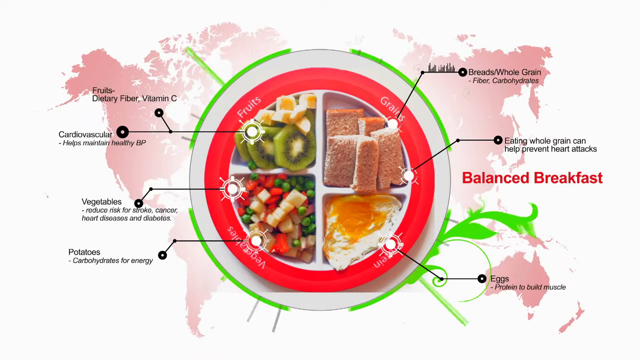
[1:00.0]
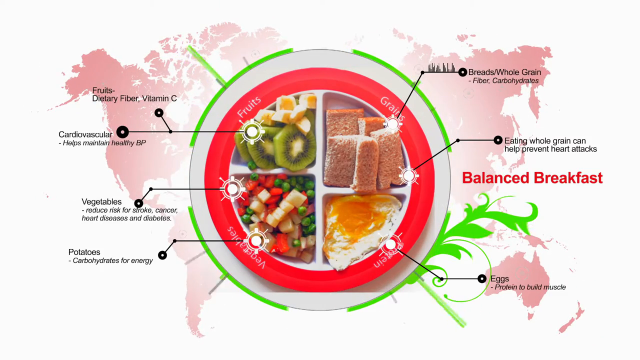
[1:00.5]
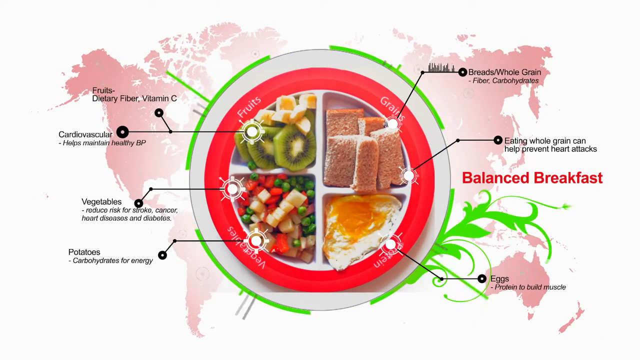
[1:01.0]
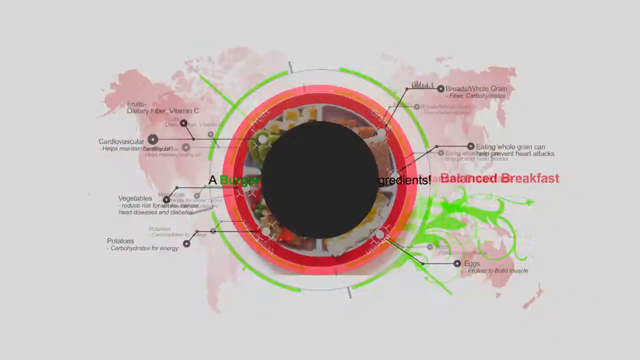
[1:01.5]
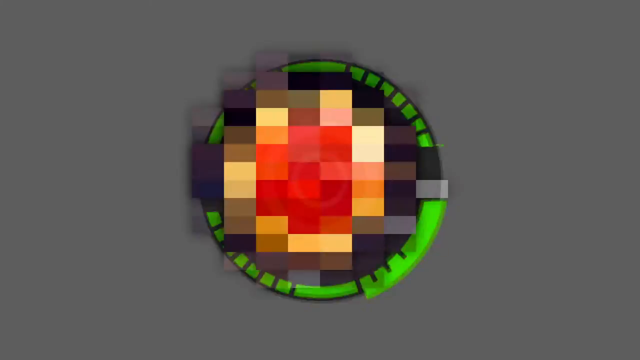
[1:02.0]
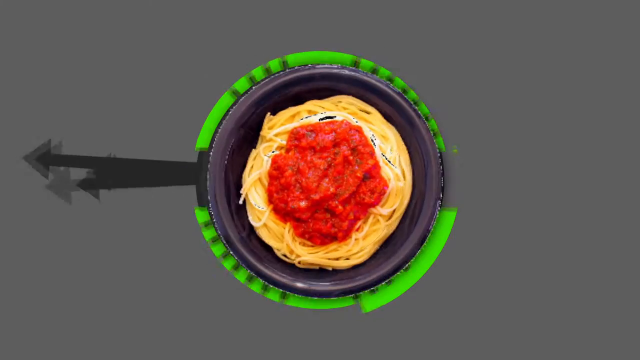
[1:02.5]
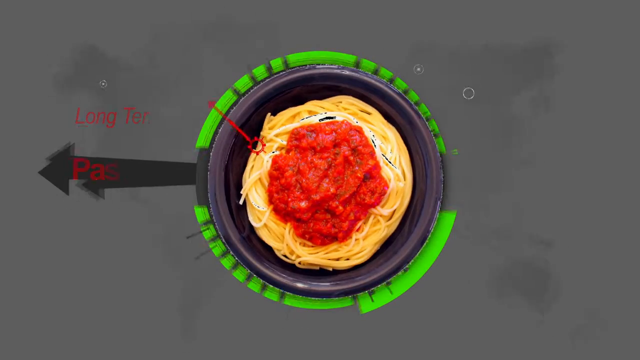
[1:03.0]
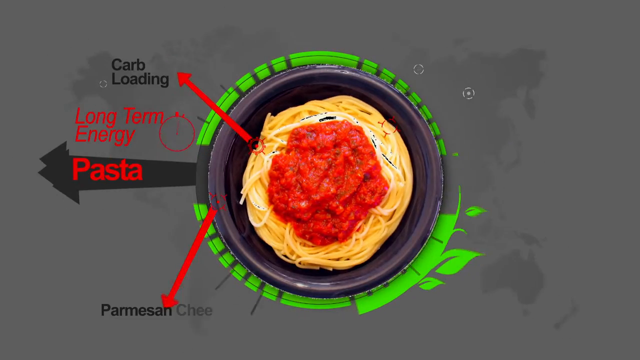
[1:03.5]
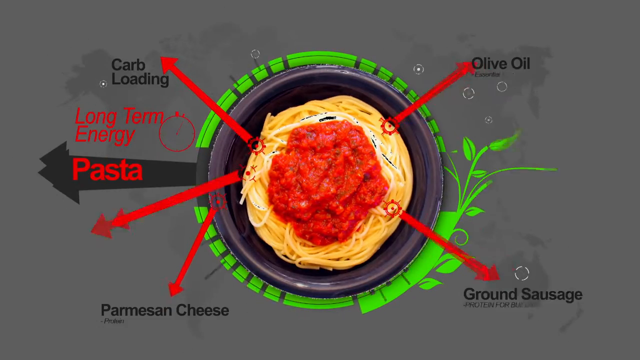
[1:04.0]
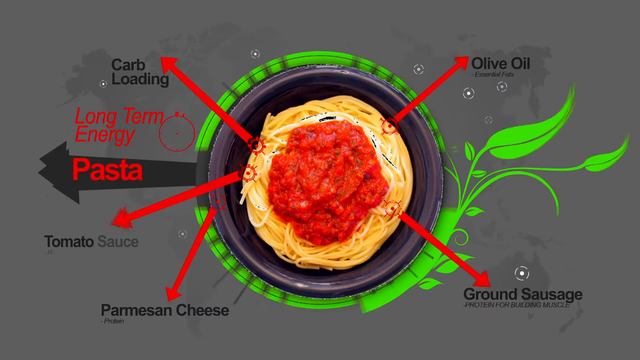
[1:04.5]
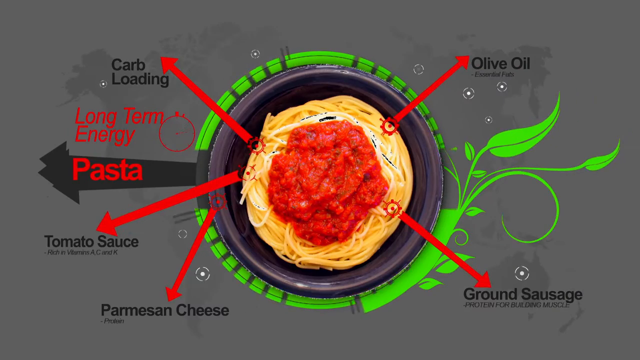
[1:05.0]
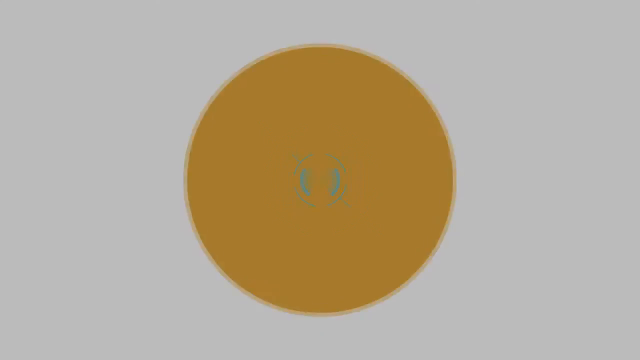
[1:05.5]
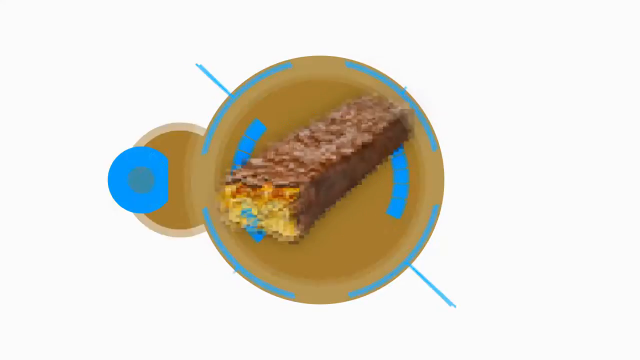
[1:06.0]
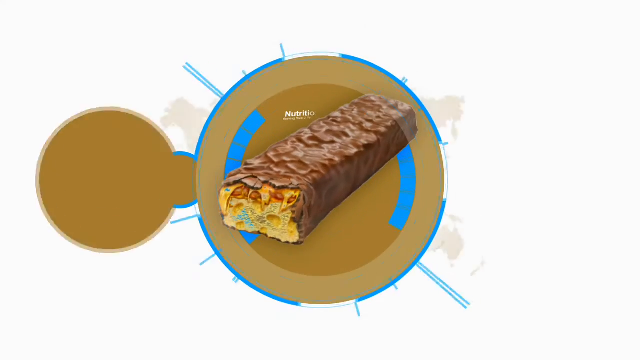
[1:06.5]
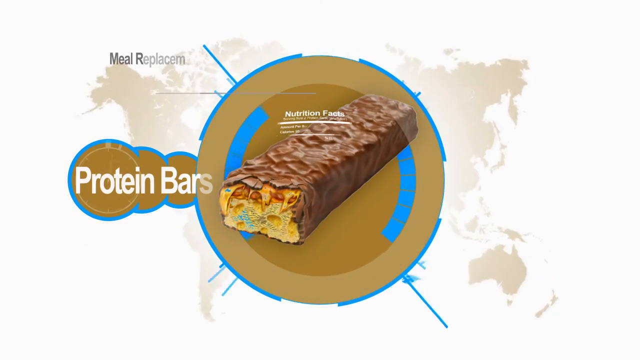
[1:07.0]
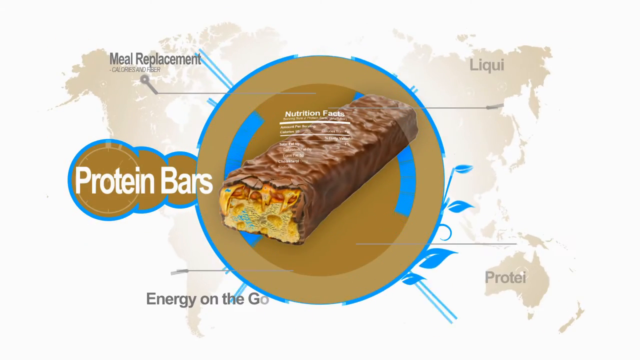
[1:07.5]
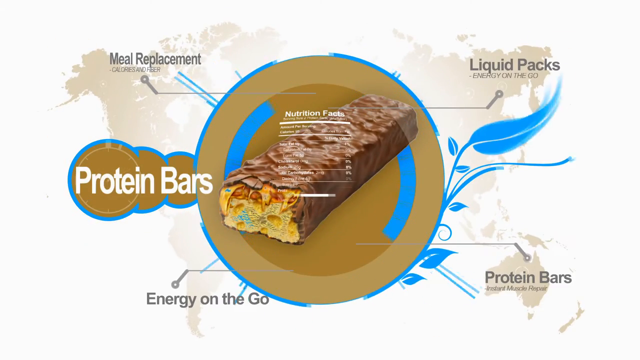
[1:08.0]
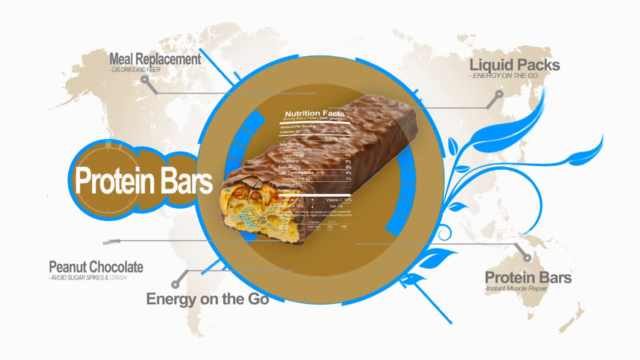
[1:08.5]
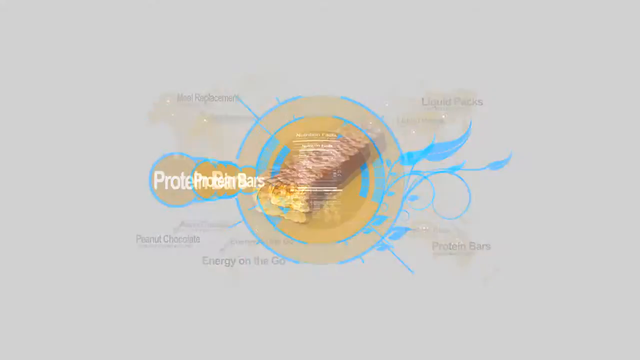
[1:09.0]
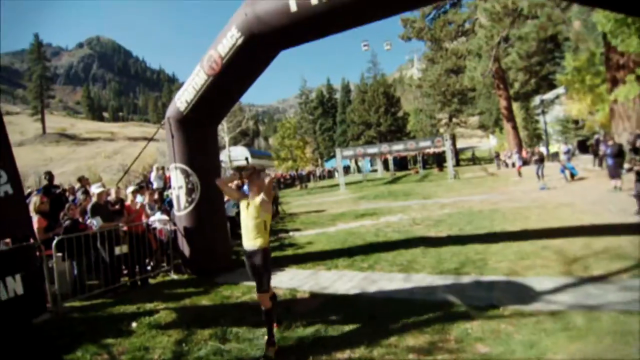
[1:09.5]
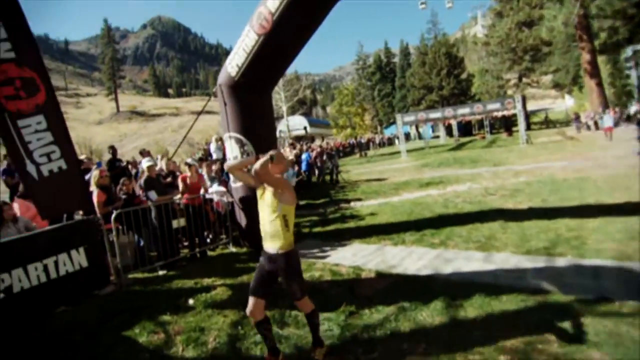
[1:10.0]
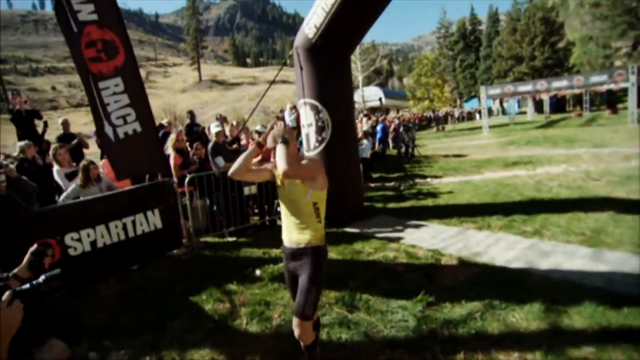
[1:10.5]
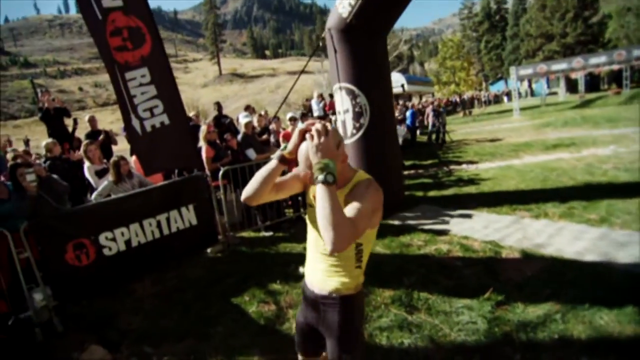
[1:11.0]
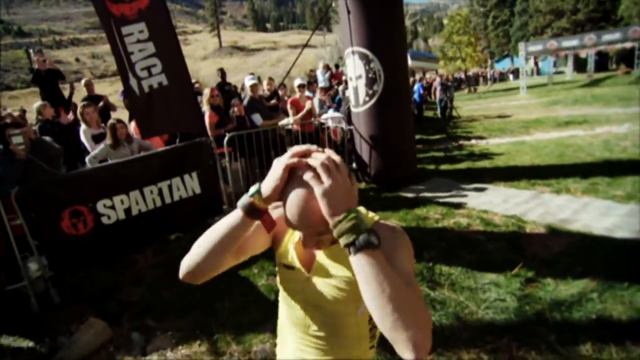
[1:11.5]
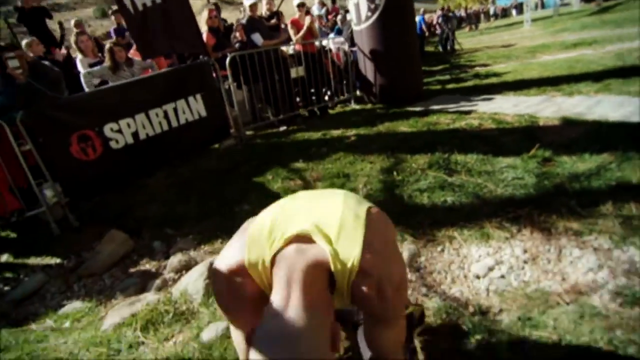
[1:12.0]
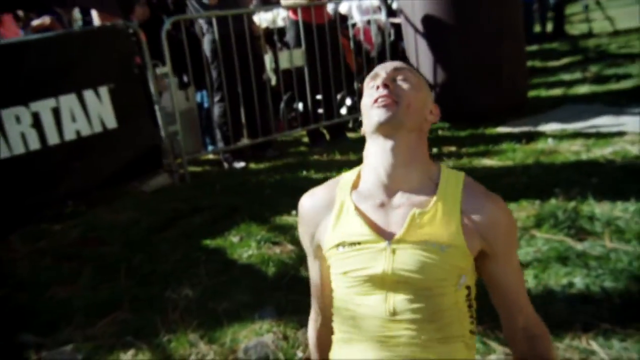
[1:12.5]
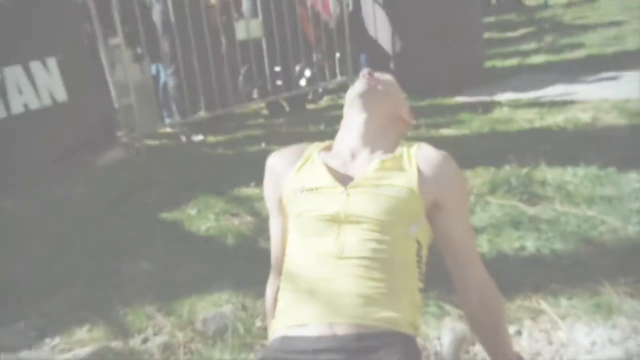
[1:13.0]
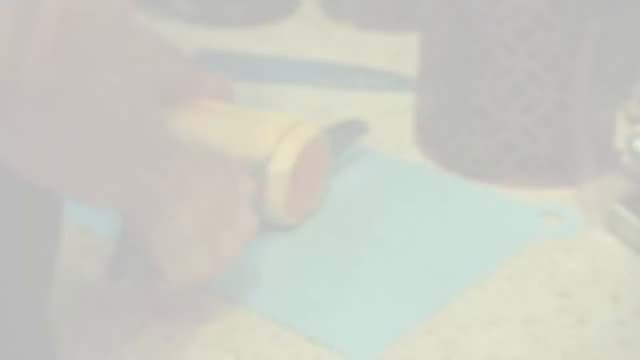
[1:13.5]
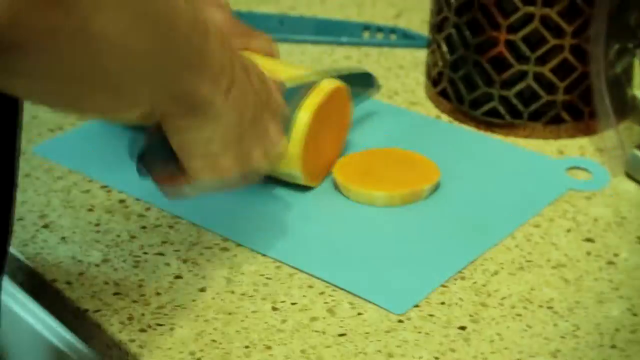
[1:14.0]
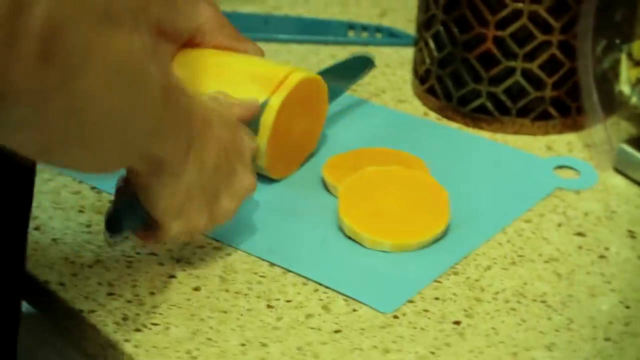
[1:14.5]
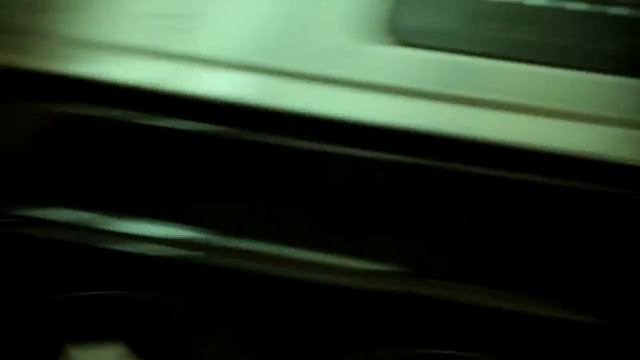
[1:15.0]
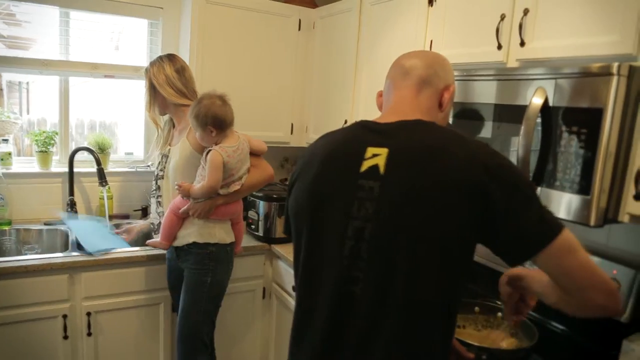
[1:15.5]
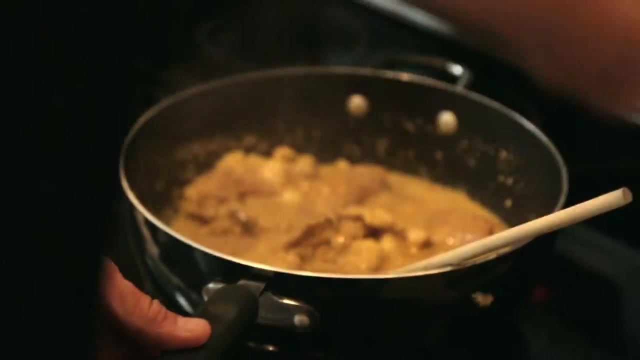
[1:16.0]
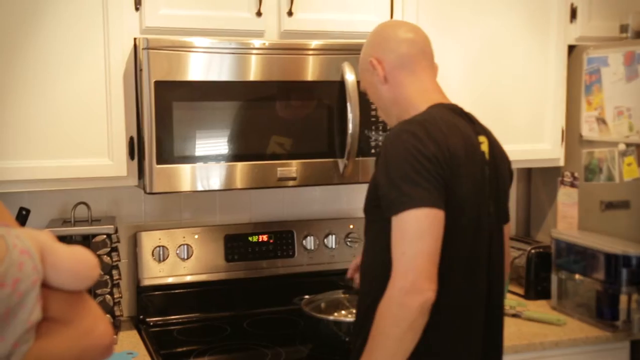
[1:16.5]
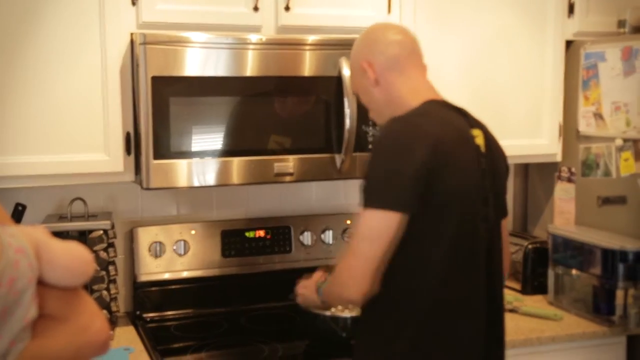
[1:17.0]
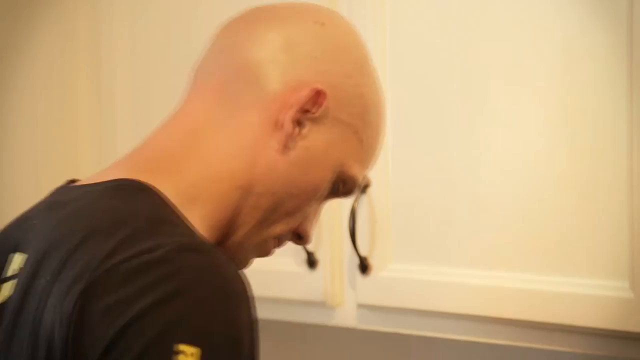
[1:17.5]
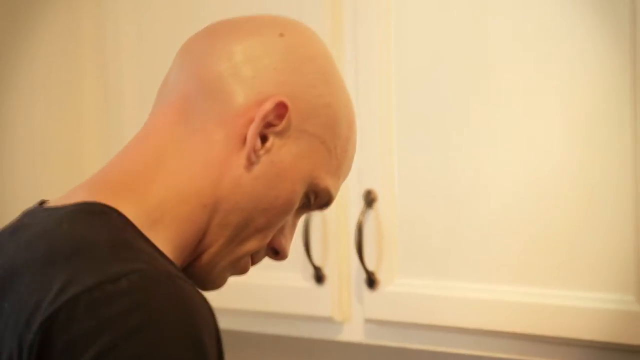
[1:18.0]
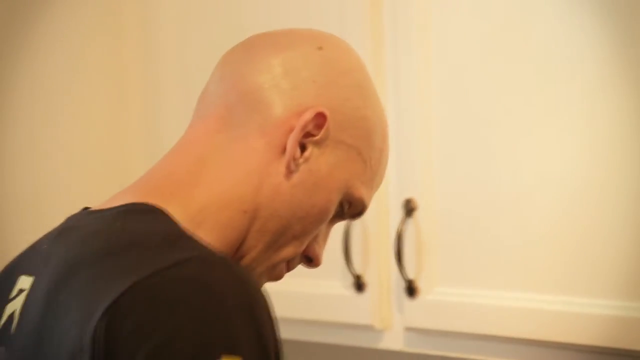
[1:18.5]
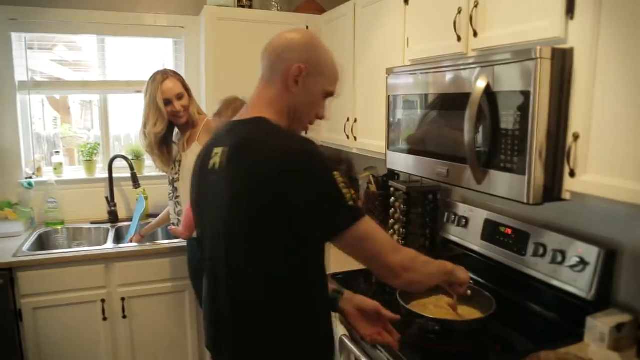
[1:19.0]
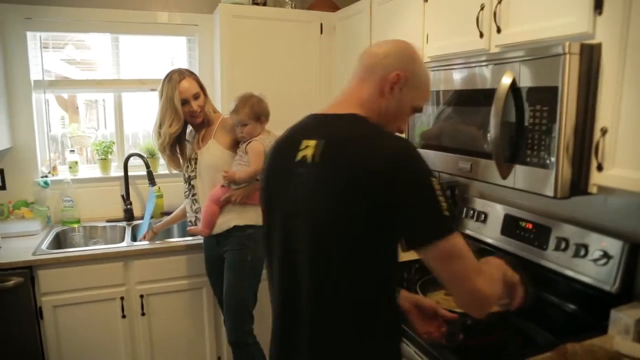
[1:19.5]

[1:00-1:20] The visual of the four quadrants of food groups is shown, with green and black lines around the outside moving clockwise very quickly. A close-up then shows what looks to be a plate of spaghetti with pasta sauce on top, with green lines around the edge and red arrows pointing in different directions. To the left, black text reads "carb loading," red text reads "long-term energy," and the word "pasta" appears, with arrows shooting out. A different graphic shows a candy bar of some sort with tan circles with blue lines behind it; to its left it reads "protein bars." The scene moves to the finish line of the race, with bystanders on the left. The racer, wearing a yellow tank top and black shorts, crosses, puts his hands on his head, goes to his knees and takes a deep breath. Next, in what looks to be a kitchen, food is being cooked and a microwave is visible. The same athlete looks down at the stove as he cooks, and a woman holding a baby is to his left. Another visual of the pasta dish follows, with various food items displayed.